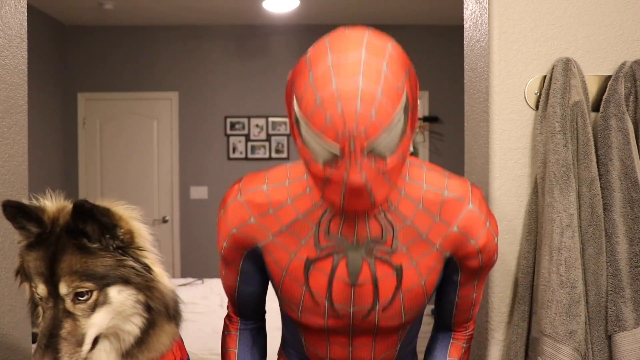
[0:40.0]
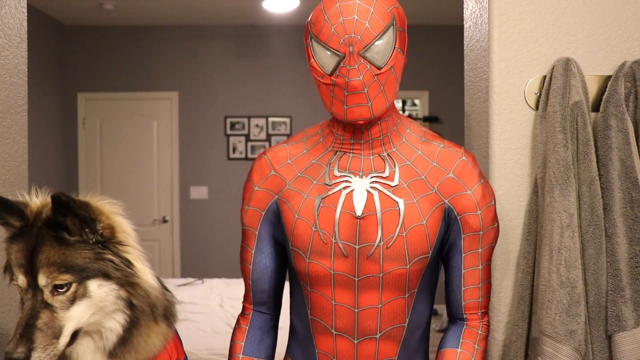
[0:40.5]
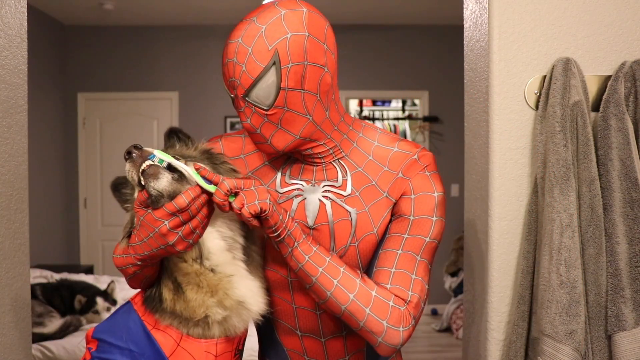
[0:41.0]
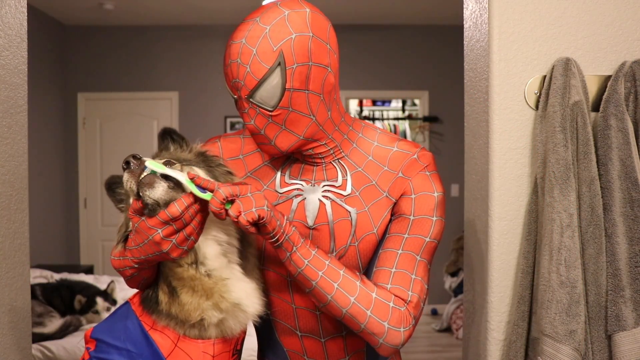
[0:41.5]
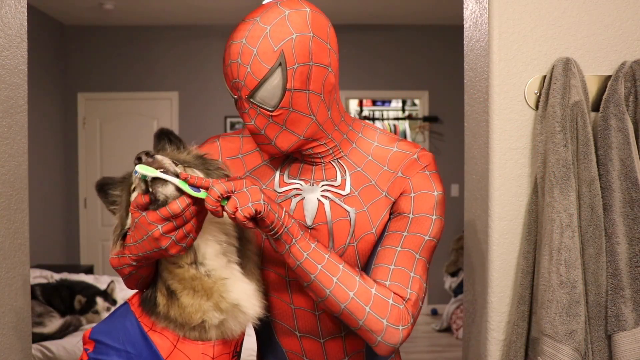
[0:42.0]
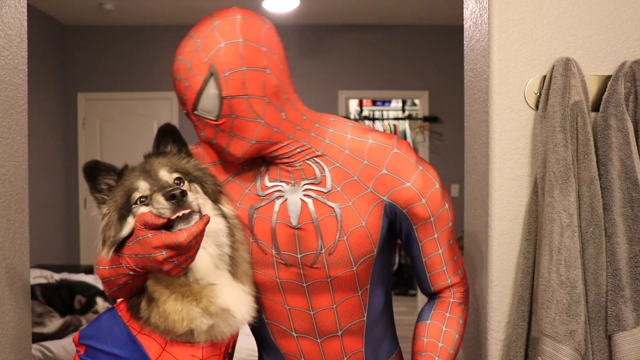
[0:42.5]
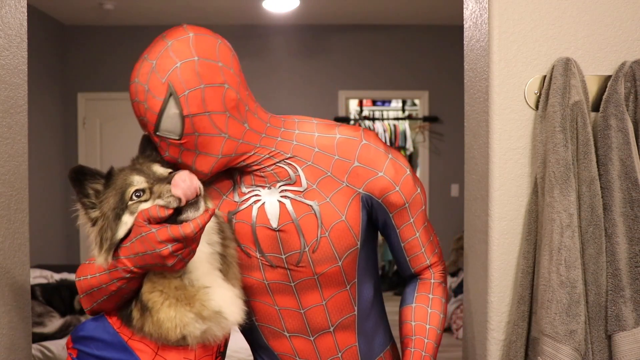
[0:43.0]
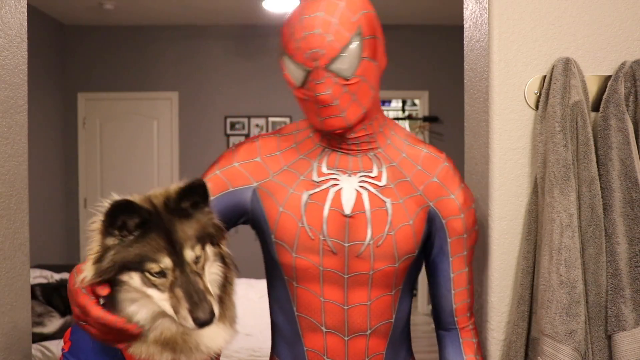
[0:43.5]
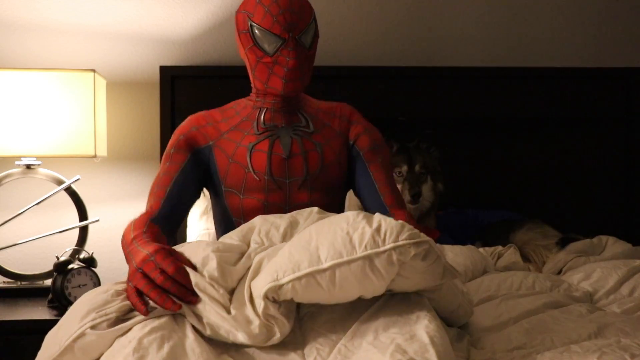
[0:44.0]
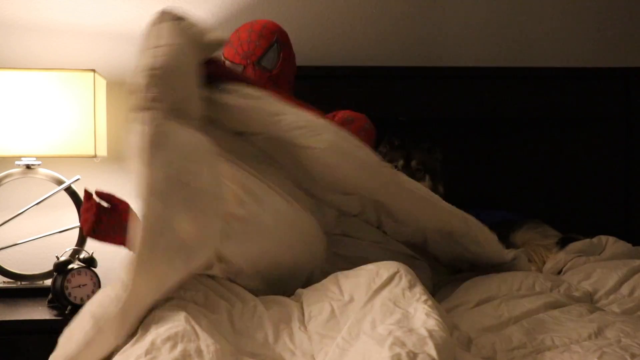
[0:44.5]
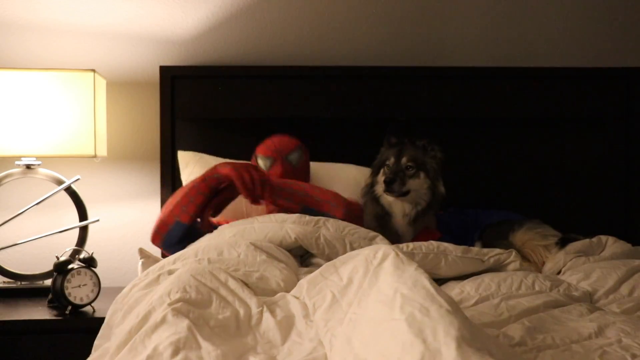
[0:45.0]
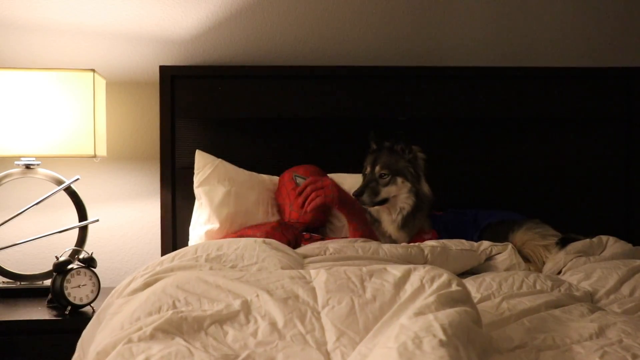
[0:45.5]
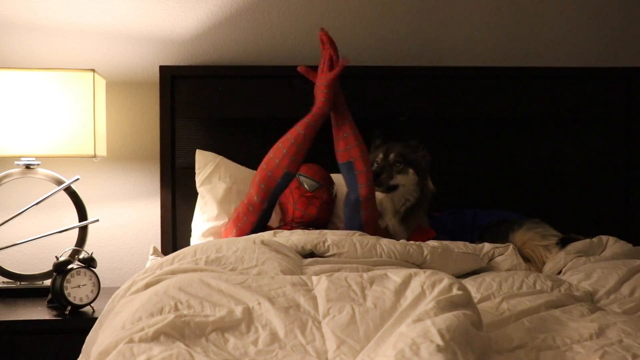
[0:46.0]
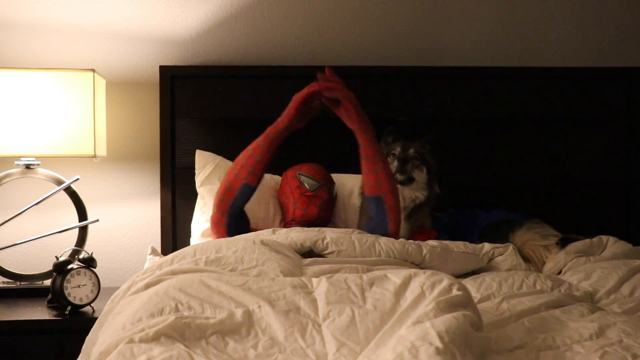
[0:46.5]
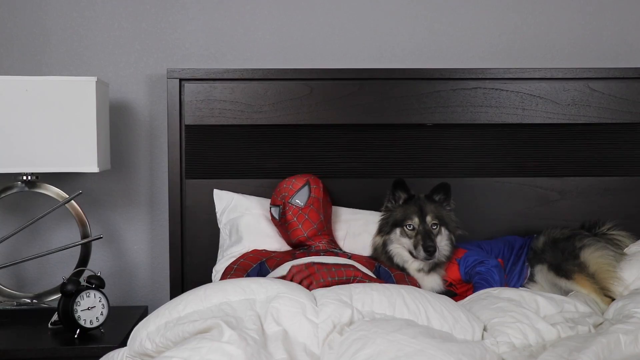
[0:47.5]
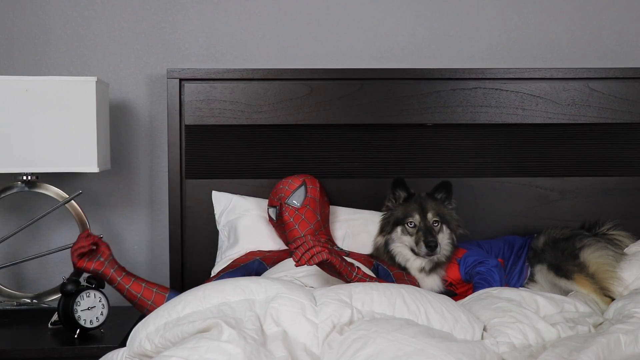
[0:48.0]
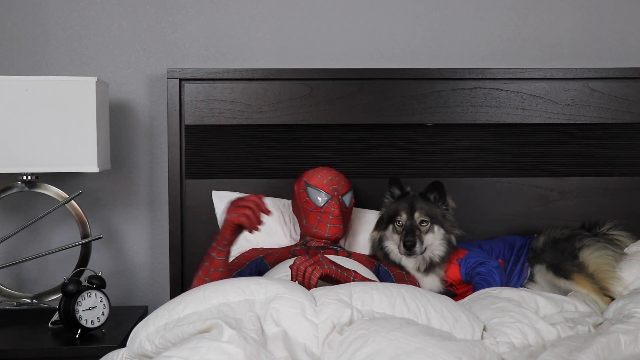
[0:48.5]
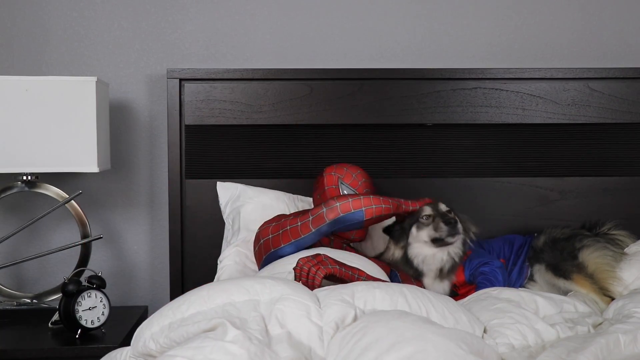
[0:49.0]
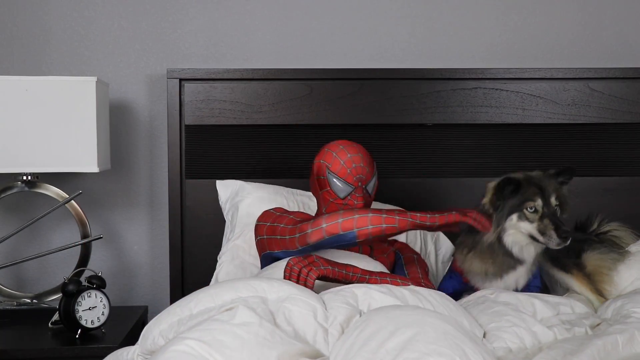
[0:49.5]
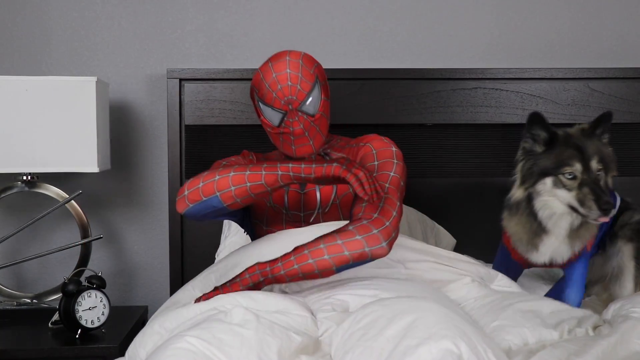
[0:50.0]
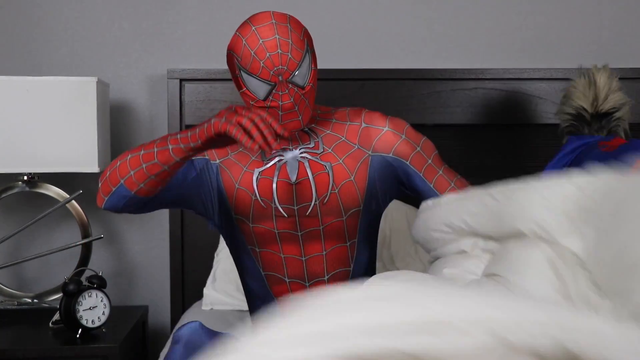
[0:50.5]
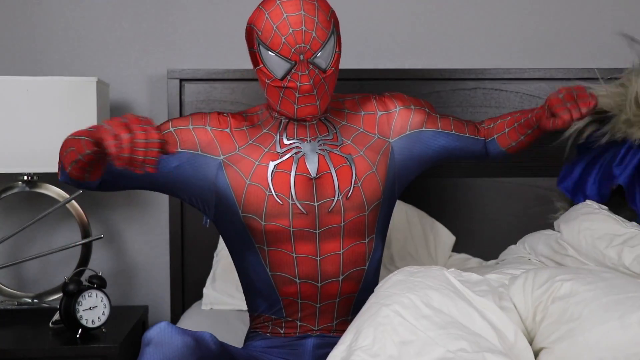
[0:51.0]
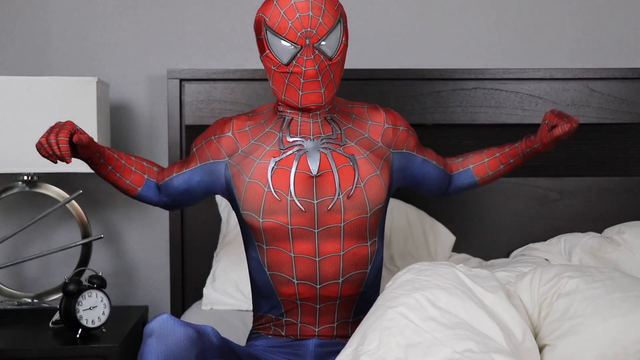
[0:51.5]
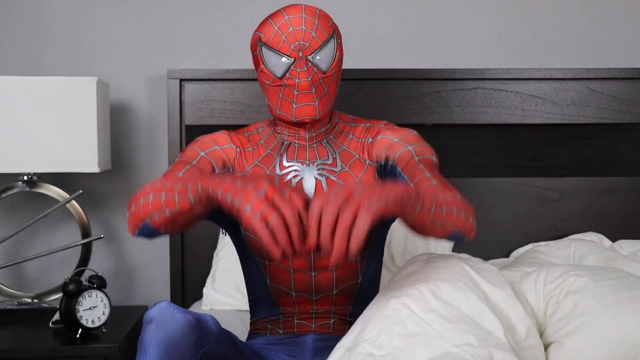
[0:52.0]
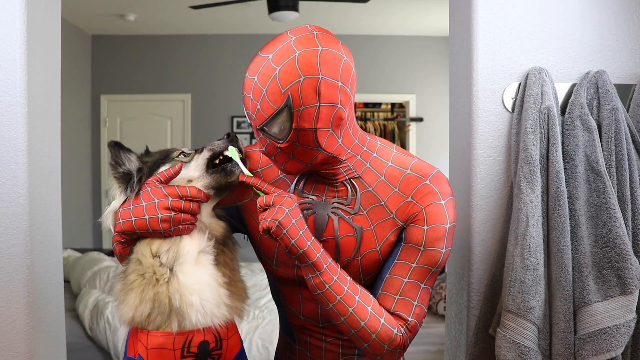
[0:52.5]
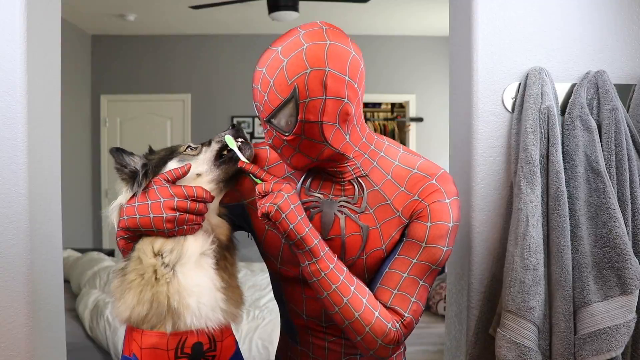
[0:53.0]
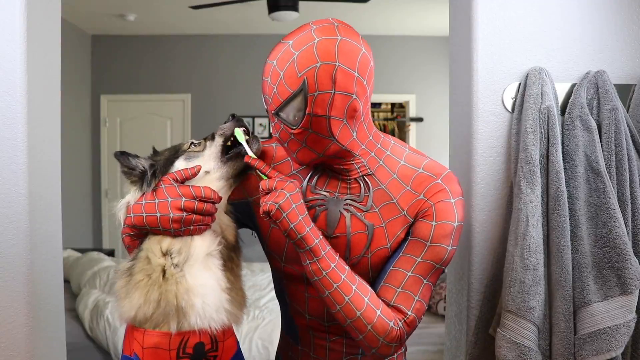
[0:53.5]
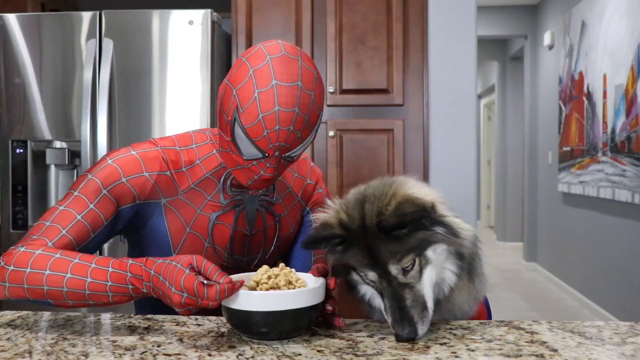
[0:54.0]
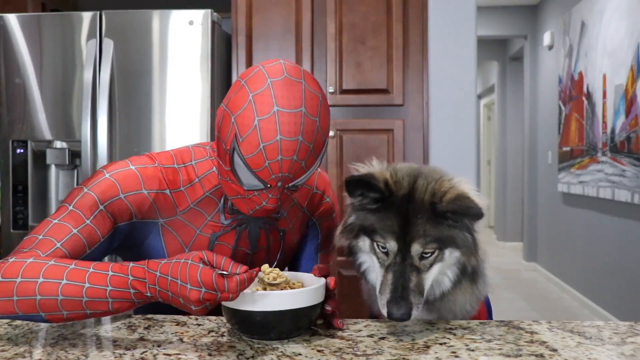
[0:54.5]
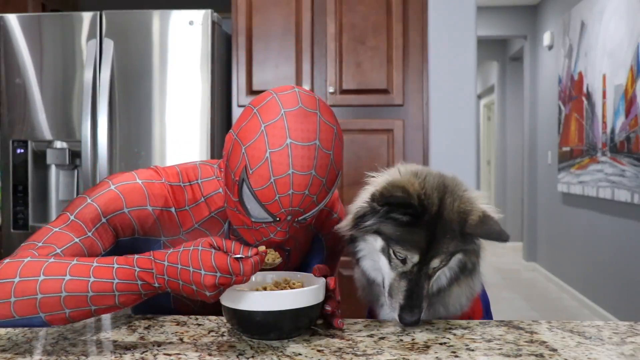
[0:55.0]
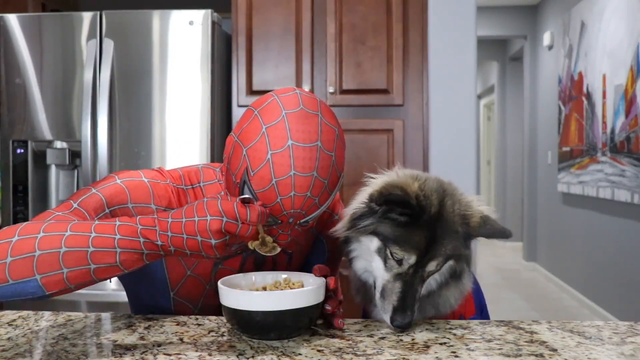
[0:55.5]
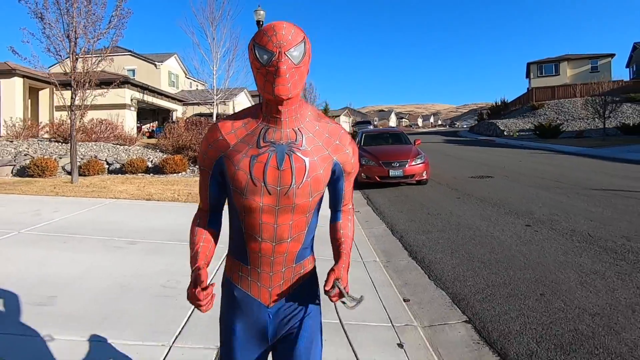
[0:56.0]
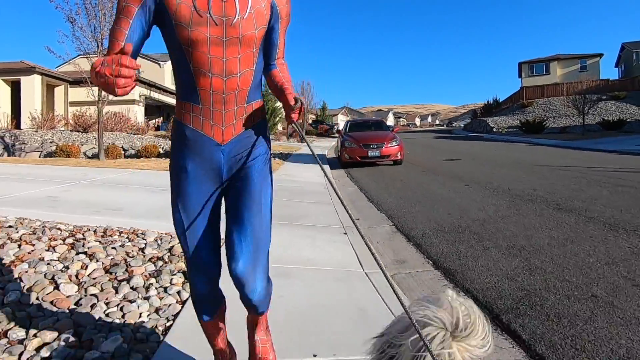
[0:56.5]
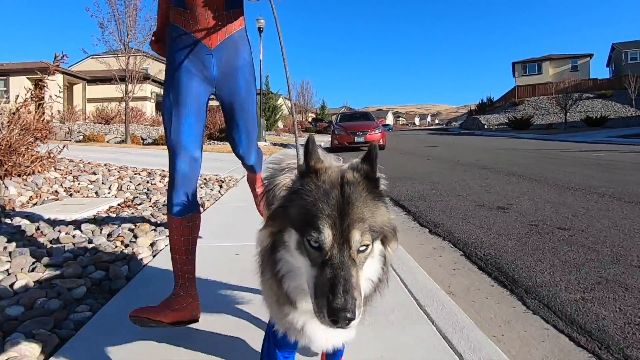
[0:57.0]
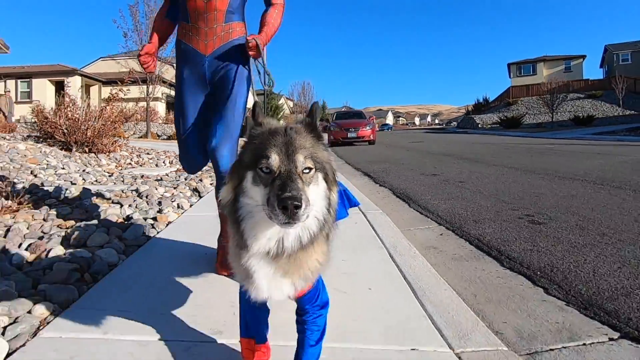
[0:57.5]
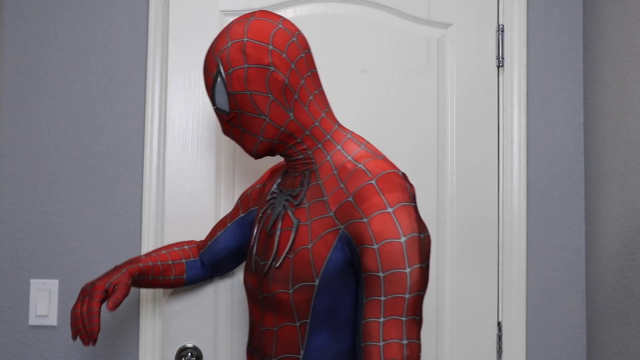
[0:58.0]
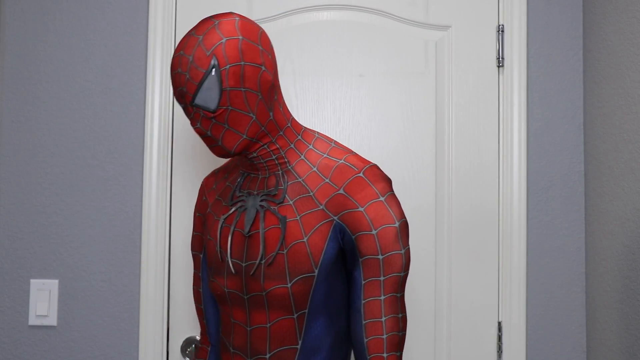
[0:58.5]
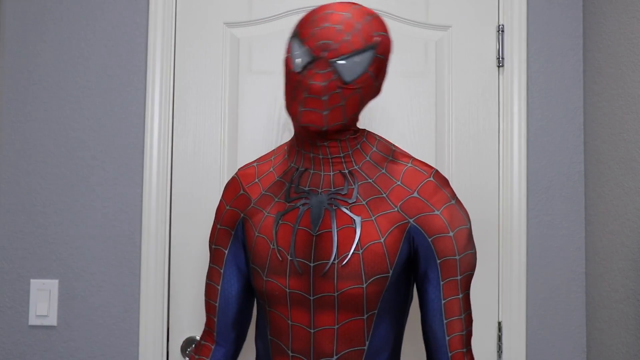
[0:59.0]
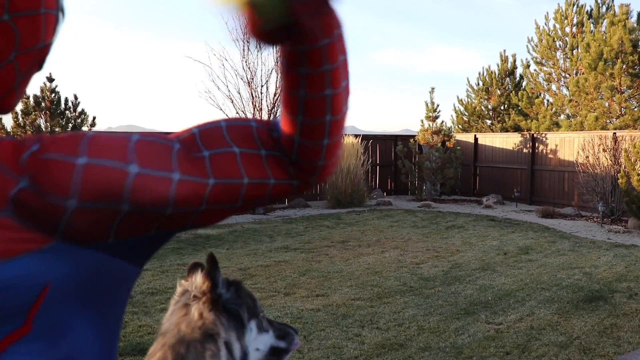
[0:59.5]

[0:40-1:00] Again titled "the life of spider dog," the scene begins with Spider-Man brushing his teeth, then brushing the dog's teeth and patting the dog on the head. They go to bed and pull the covers up; Spider-Man claps his hands twice and the lights go out. Morning comes again and he hits the alarm clock. They get out of bed, eat cereal, go jogging through the neighborhood, get back to the house after the jog, and close the door. The view pans to the backyard, where he throws the ball to the dog. They go to bed again, Spider-Man claps to turn off the light, and when they wake up in the morning the same routine starts over and over again.